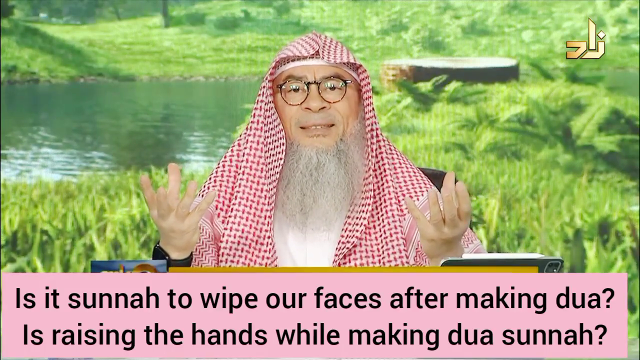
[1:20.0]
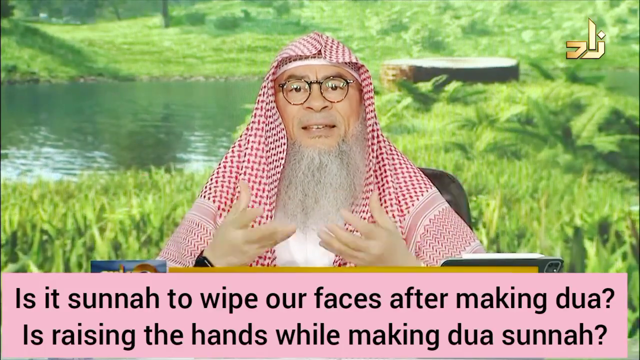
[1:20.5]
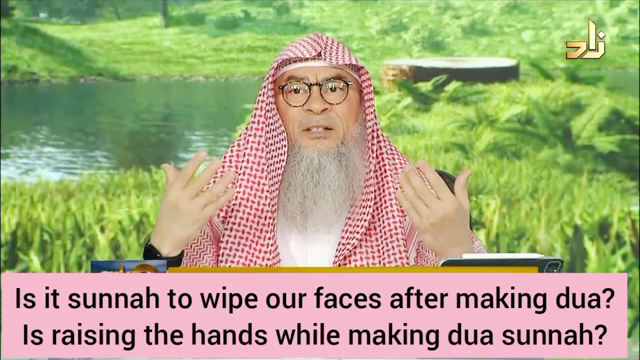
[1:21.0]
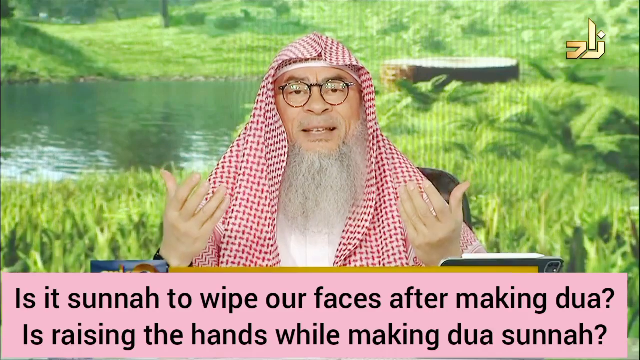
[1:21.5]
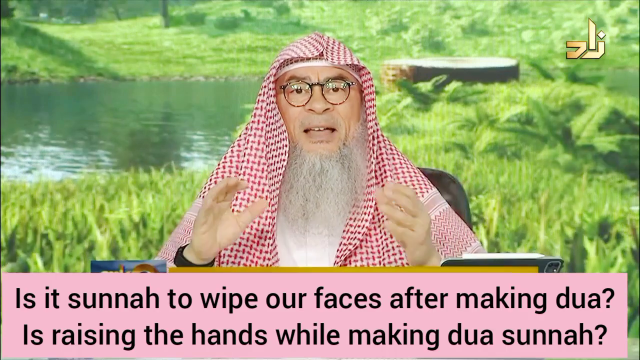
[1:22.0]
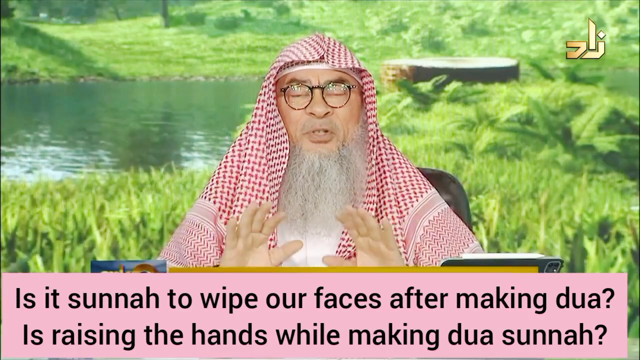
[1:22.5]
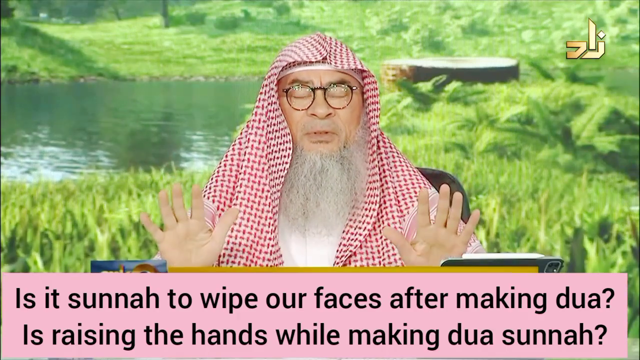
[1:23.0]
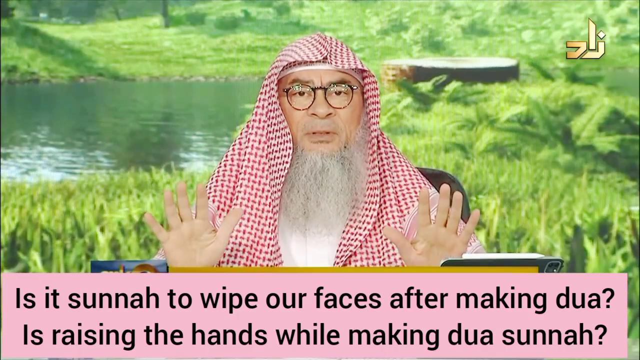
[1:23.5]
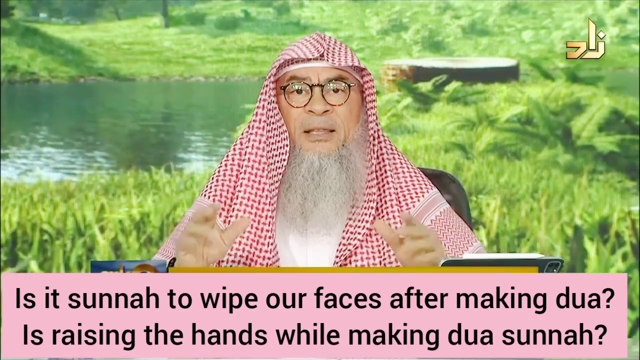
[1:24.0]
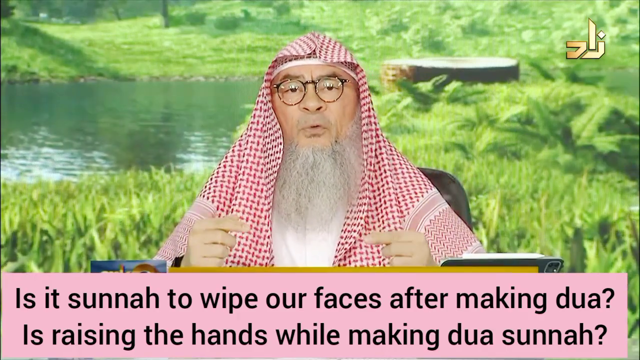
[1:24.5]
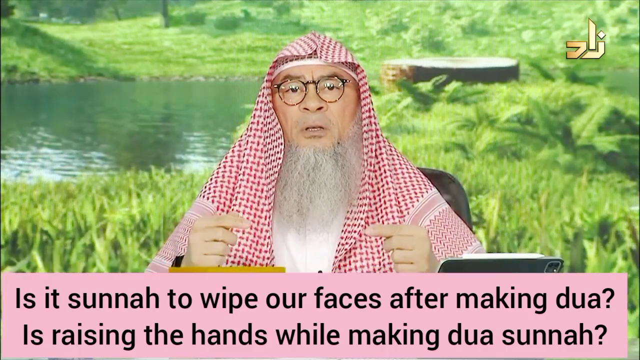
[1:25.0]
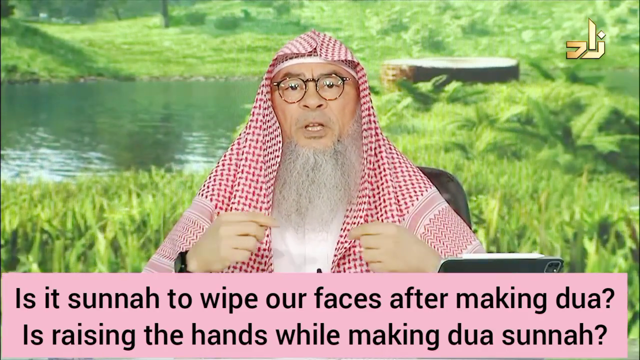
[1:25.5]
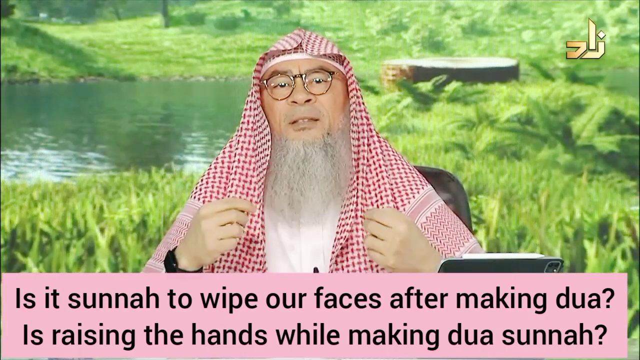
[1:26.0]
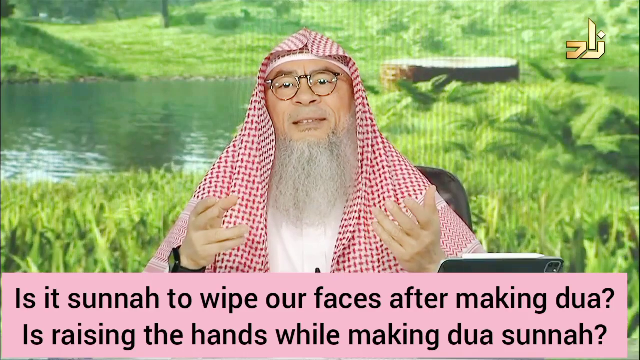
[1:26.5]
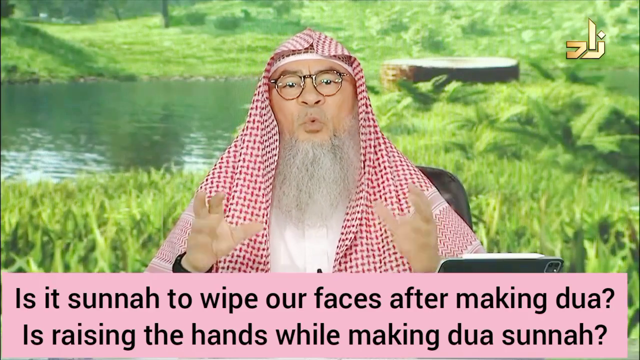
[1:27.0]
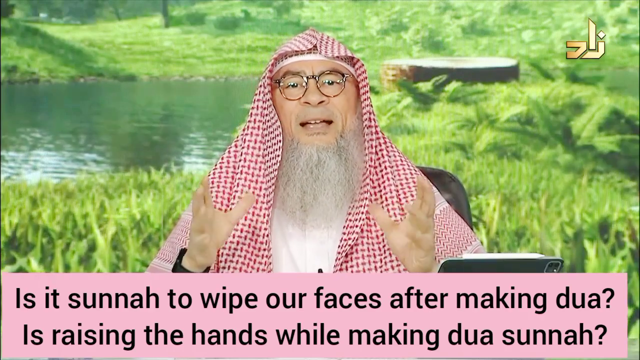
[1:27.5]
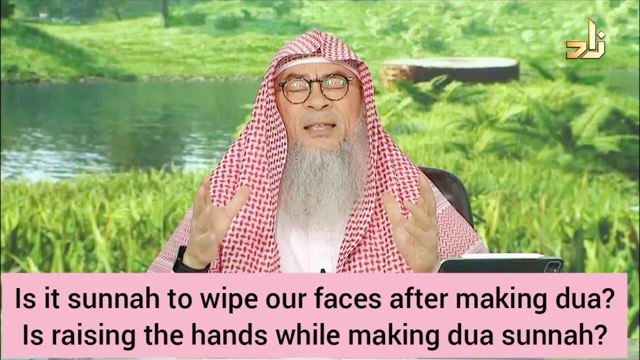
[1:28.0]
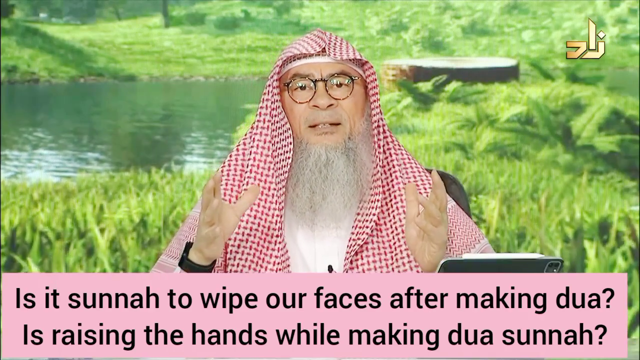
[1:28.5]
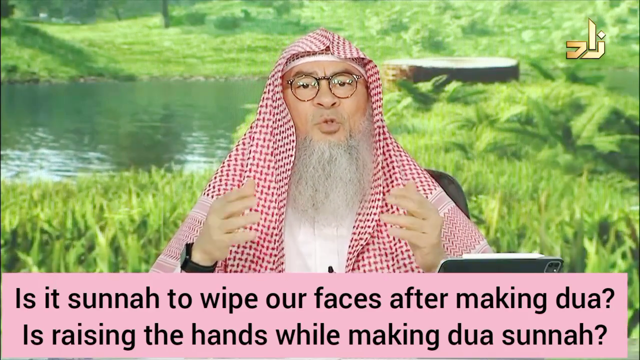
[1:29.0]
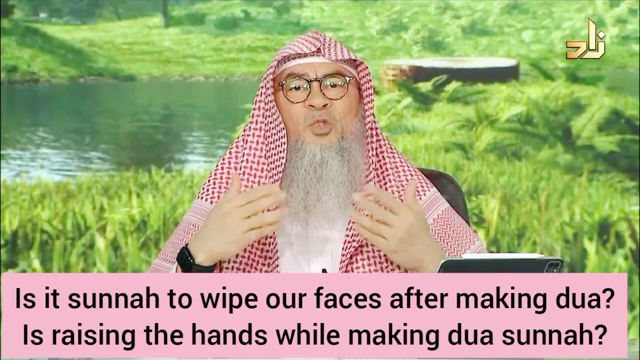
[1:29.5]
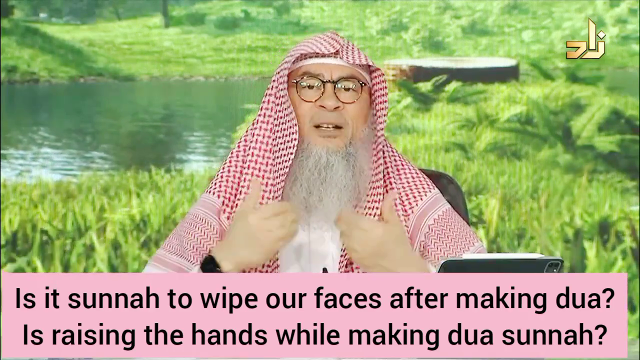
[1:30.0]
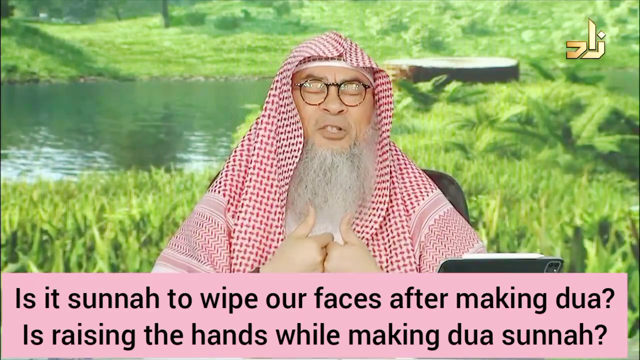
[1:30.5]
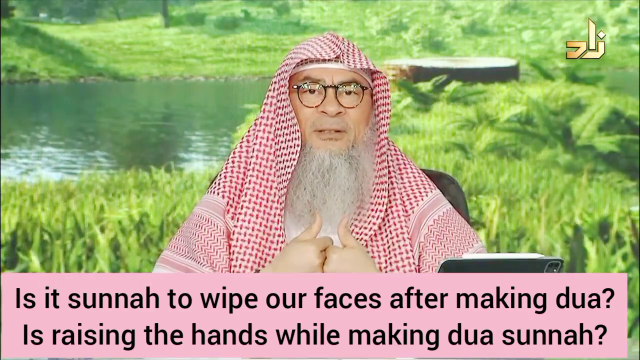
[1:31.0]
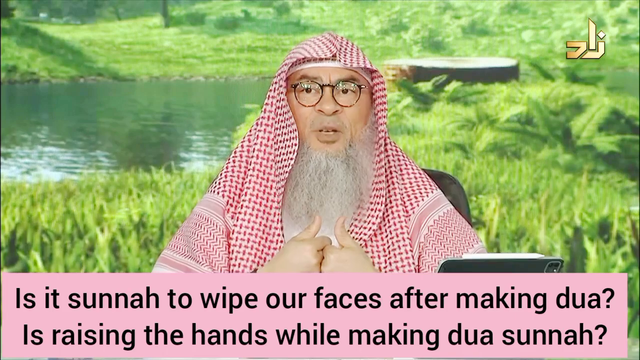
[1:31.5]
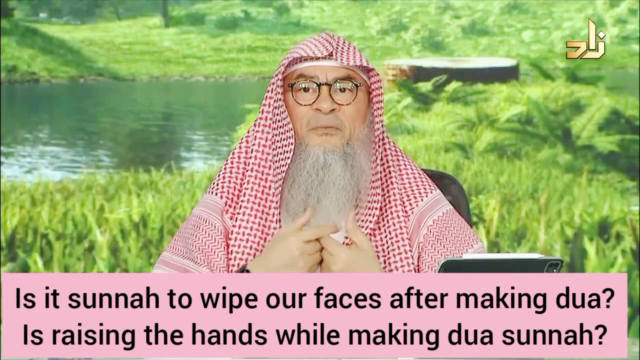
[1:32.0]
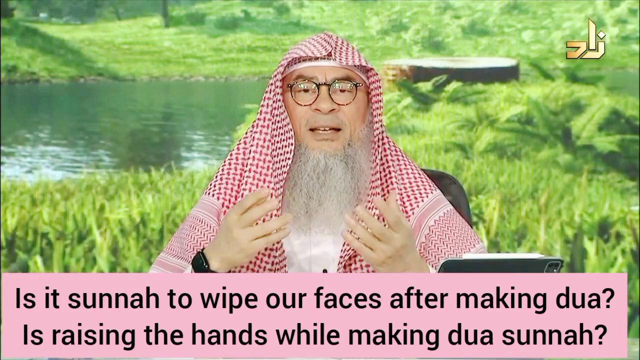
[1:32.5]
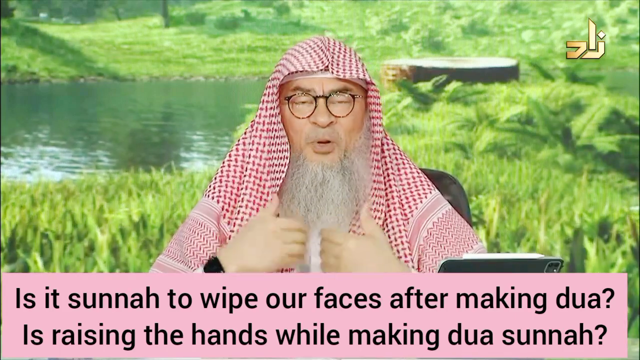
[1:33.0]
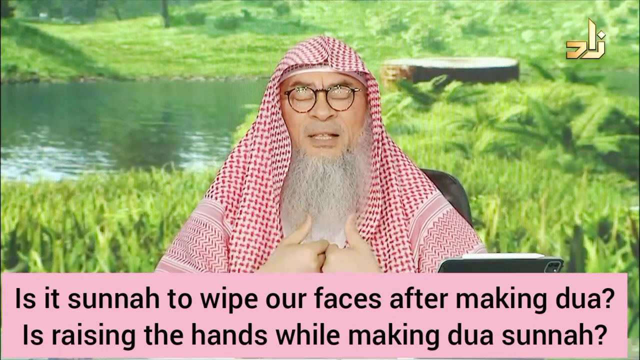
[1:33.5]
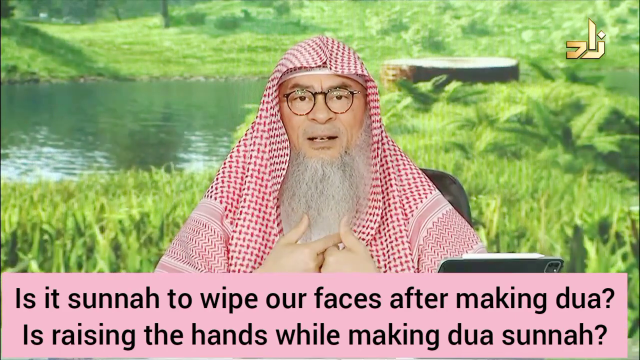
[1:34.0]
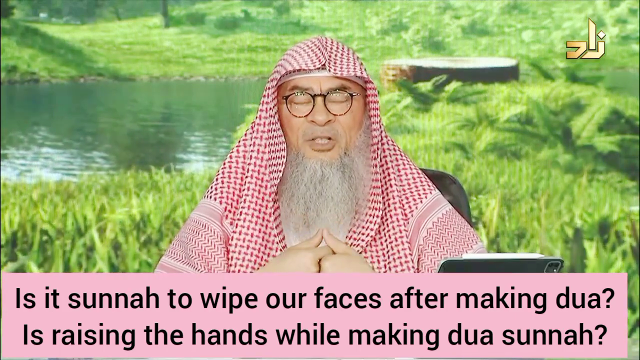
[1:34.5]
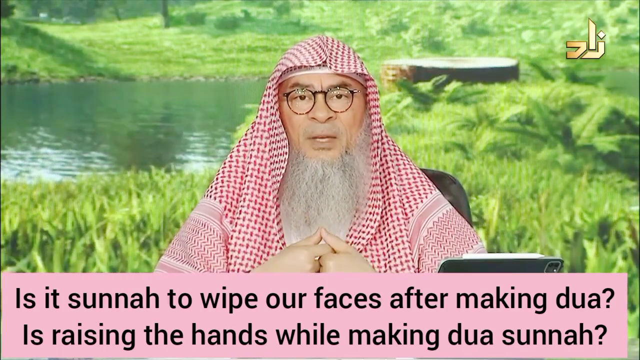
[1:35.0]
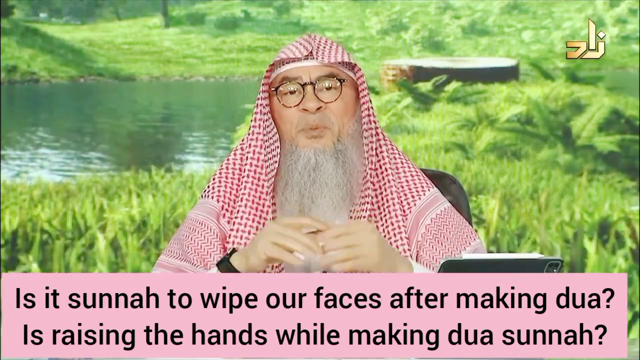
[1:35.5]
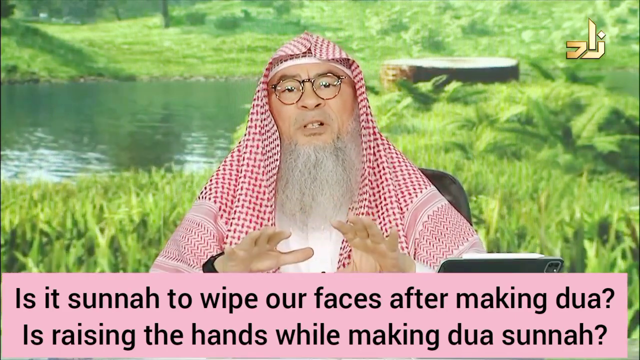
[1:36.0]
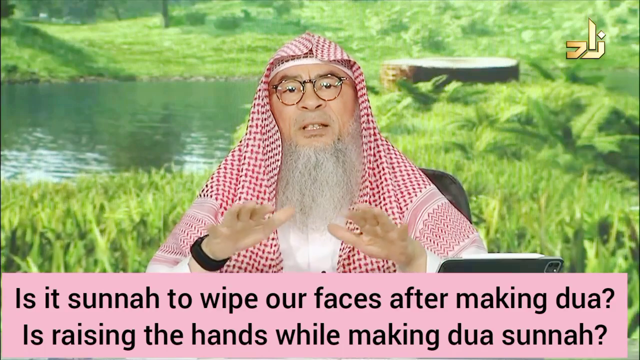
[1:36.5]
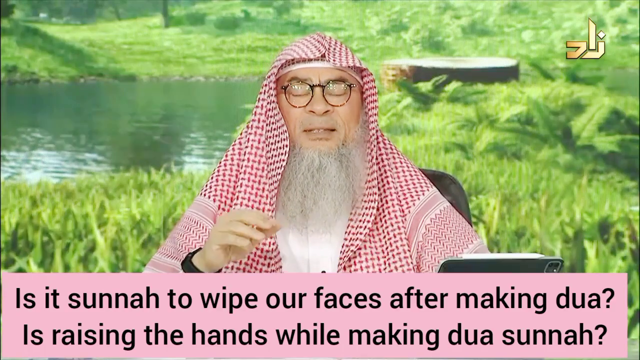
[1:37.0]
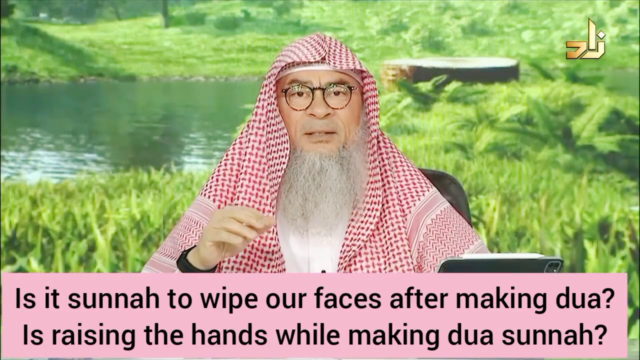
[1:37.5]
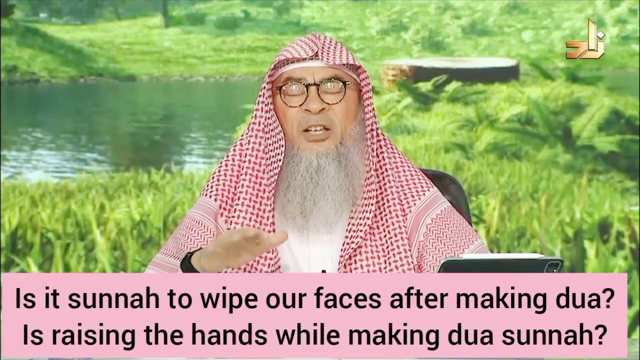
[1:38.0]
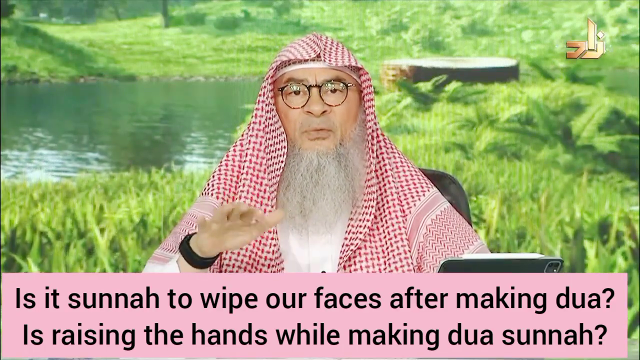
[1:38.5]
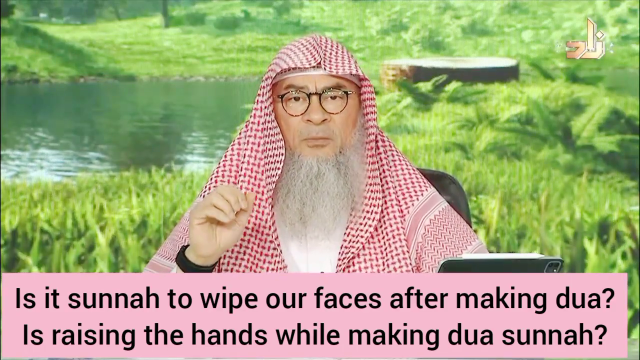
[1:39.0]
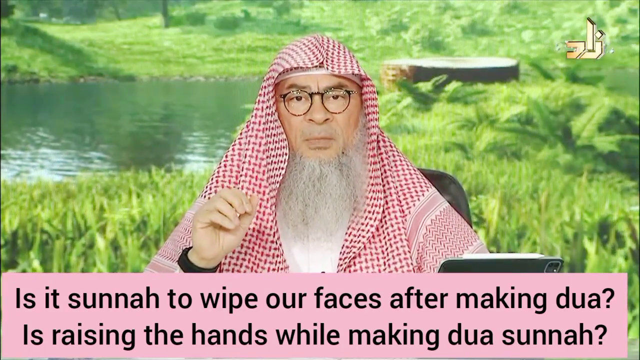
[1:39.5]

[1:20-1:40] The host keeps talking with his hands a lot in front of the same green screen background, seen from the same chest-up close-up angle. The text at the bottom of the screen is unchanged. The background shows a lot of green grass and green leaves, with a small pond on the left that has small waves. He talks continuously about the two questions at the bottom of the screen.